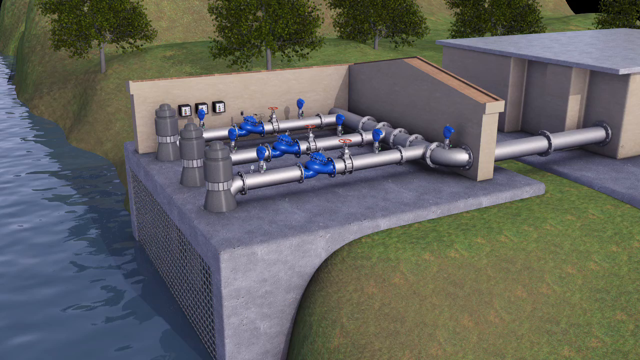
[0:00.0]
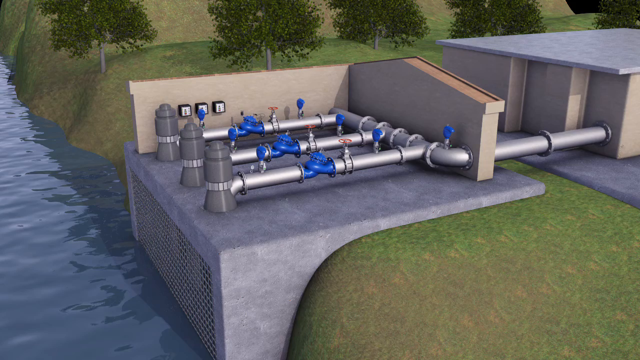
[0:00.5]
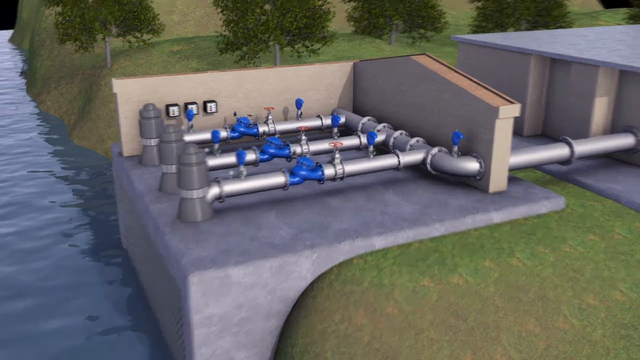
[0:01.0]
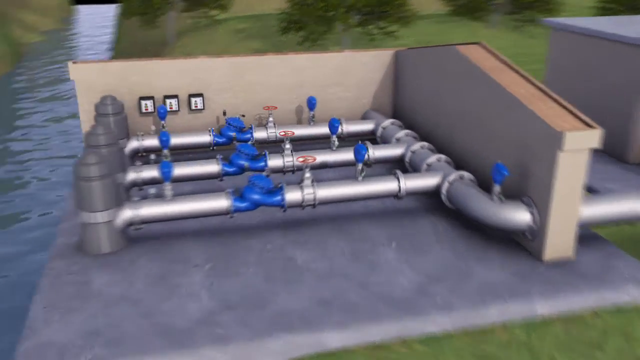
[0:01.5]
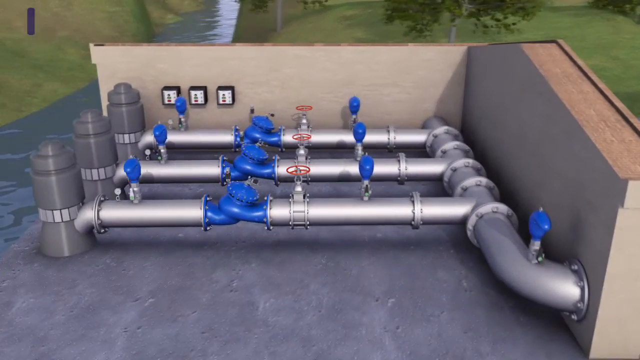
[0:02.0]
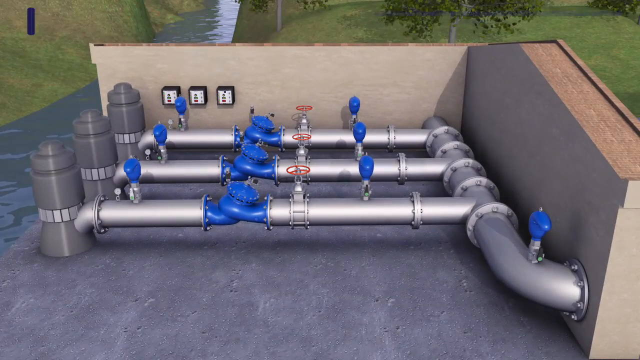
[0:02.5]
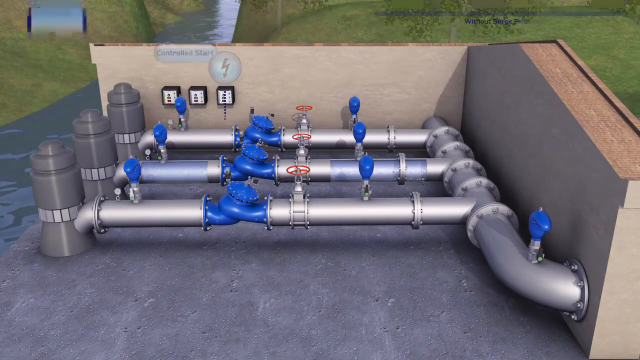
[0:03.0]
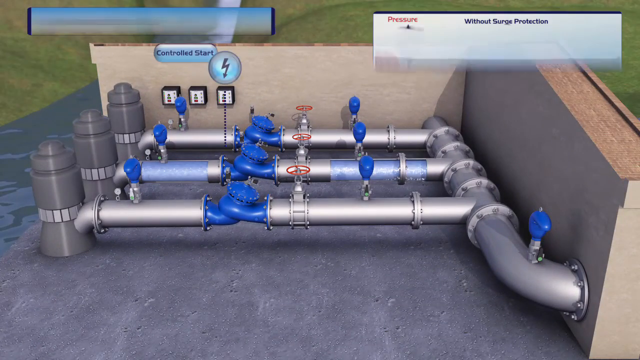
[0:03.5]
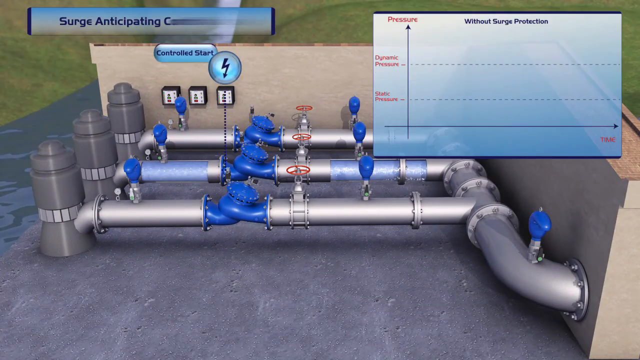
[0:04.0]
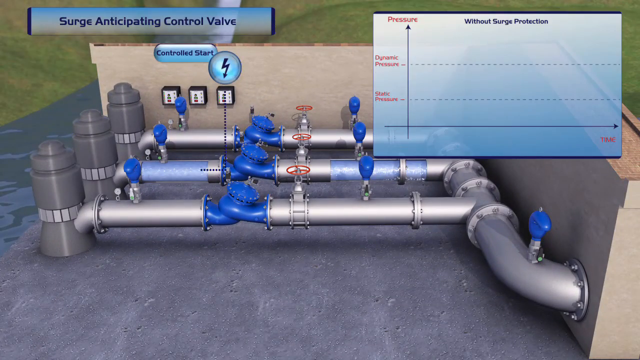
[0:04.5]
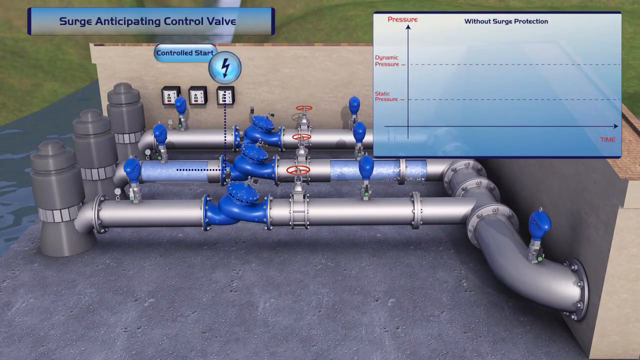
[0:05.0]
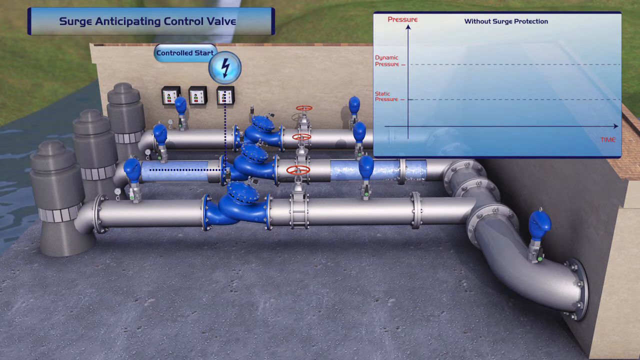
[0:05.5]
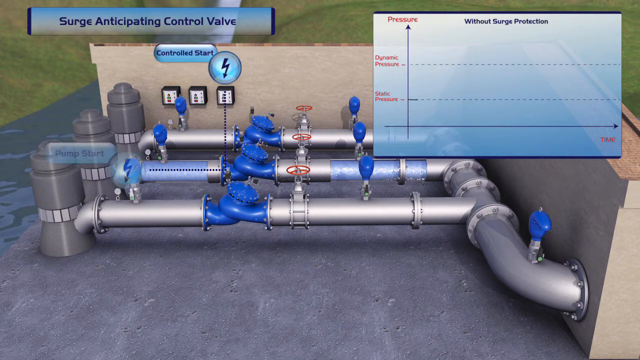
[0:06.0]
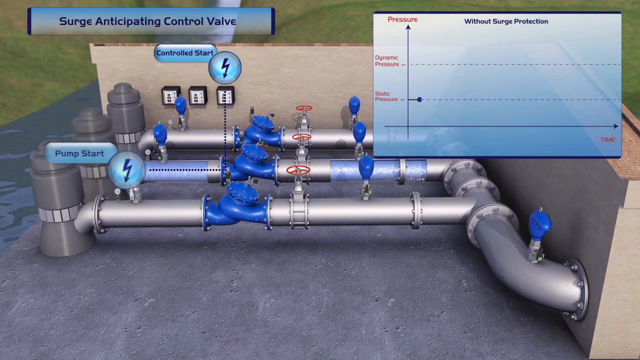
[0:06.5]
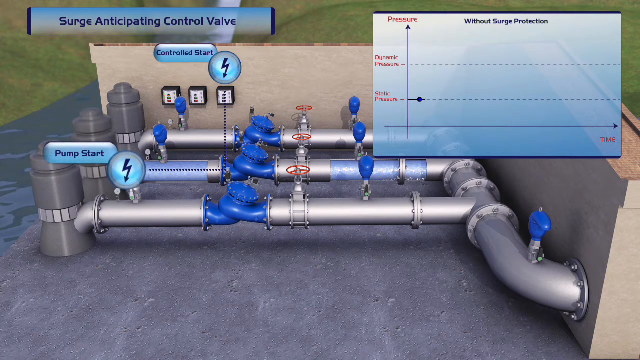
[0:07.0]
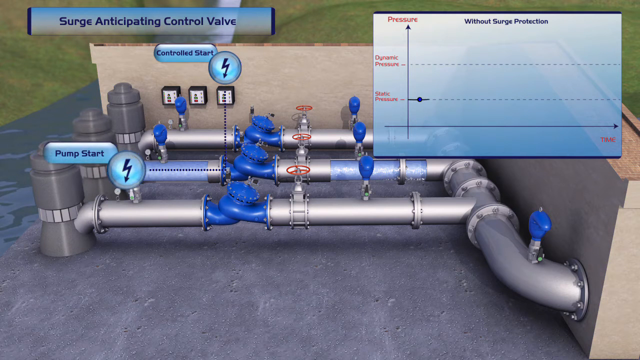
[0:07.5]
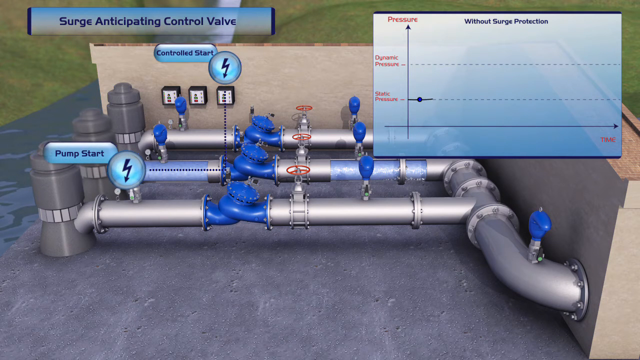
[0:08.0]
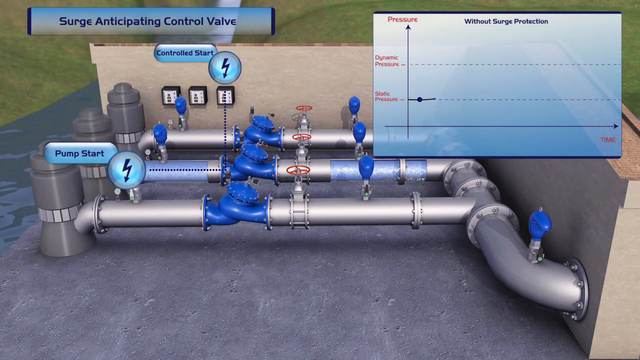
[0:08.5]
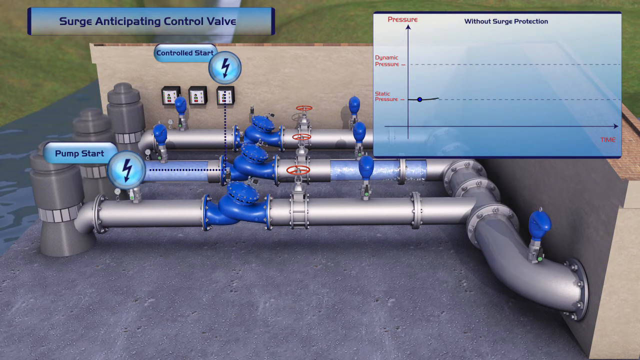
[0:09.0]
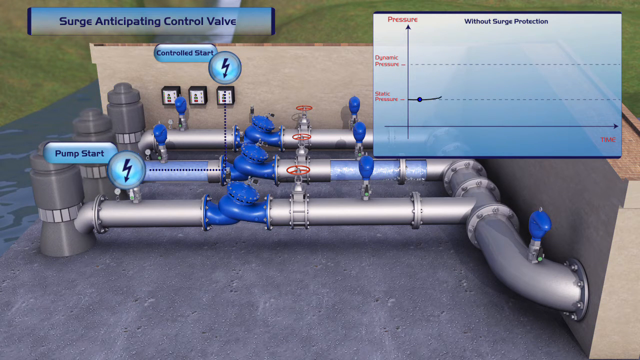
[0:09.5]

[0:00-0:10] A structure is built on the bank of a body of water. On the left-hand side is water, and to the right of it is the bank, with trees in the background. In the foreground is a structure with a back wall and a wall on the right. Its foundation is a concrete slab that extends down into the edge of the water. Inside the structure, a series of three pipes runs from left to right and meets one larger pipe on the right, which exits the building on the right and goes into a second building to the right of the first. The structures have blue valves in the center, and on top of them each has two other blue gauges or valves; in the very center there is a red shutoff valve.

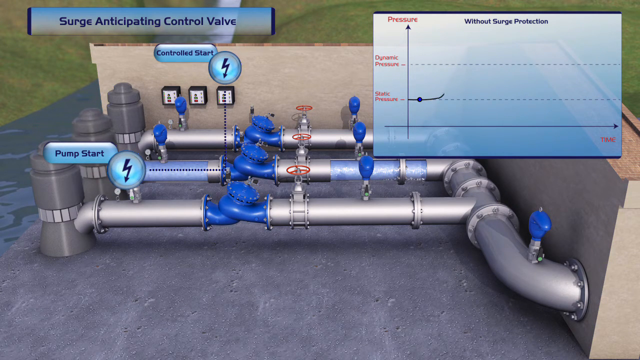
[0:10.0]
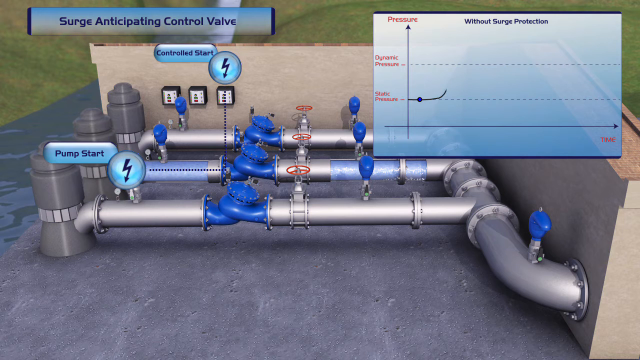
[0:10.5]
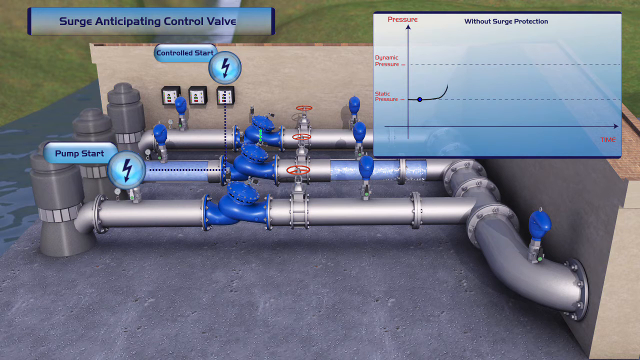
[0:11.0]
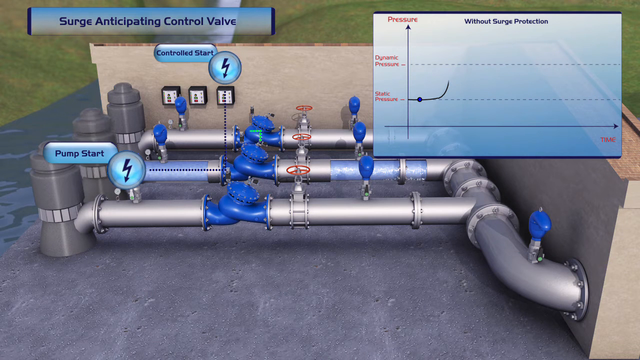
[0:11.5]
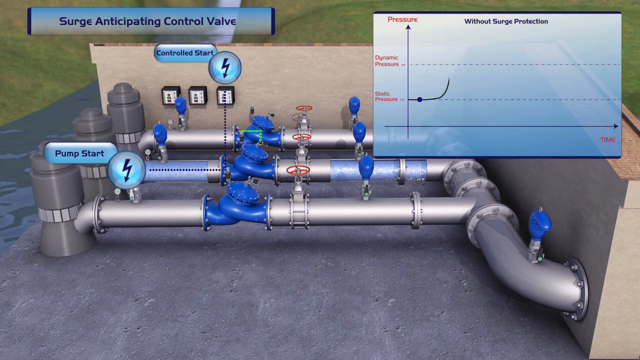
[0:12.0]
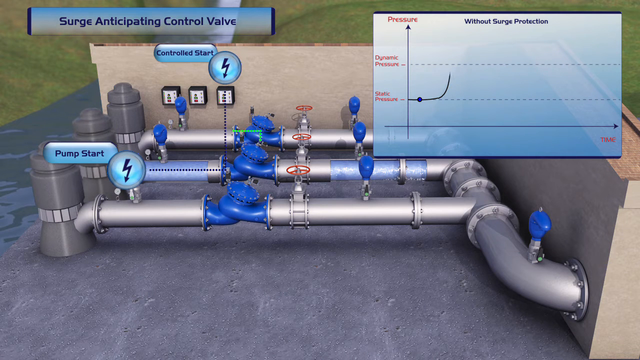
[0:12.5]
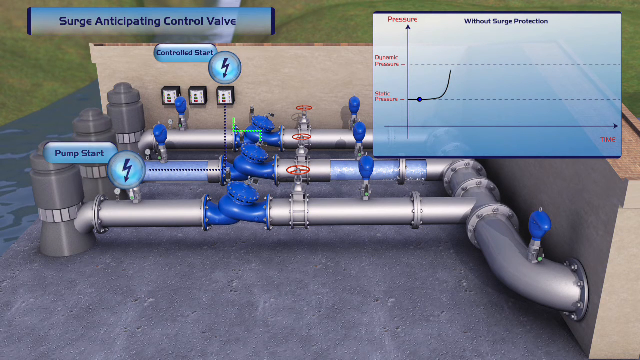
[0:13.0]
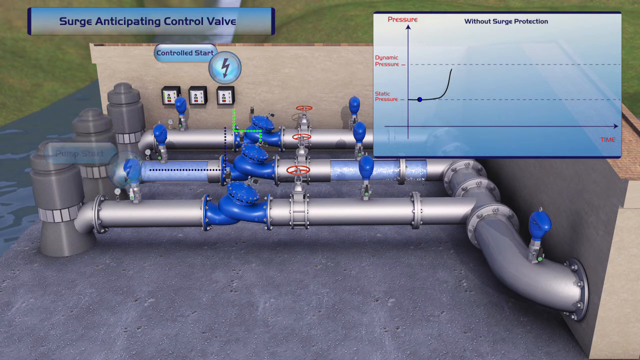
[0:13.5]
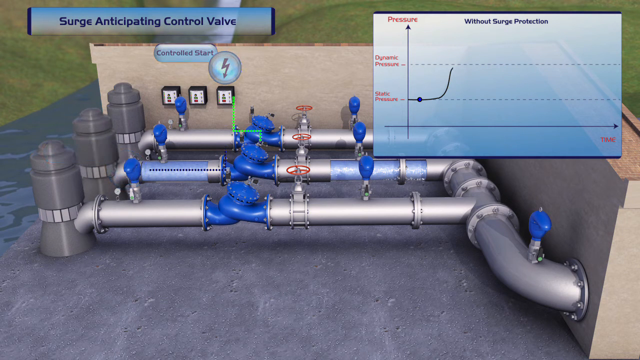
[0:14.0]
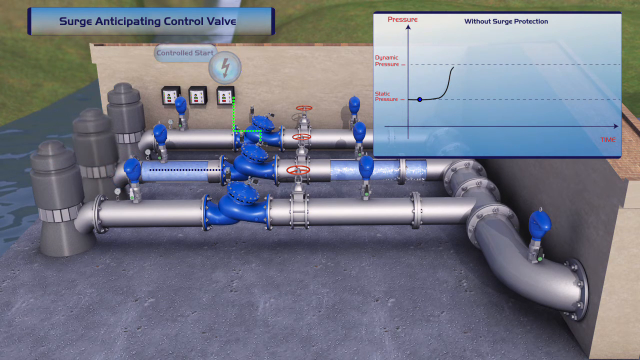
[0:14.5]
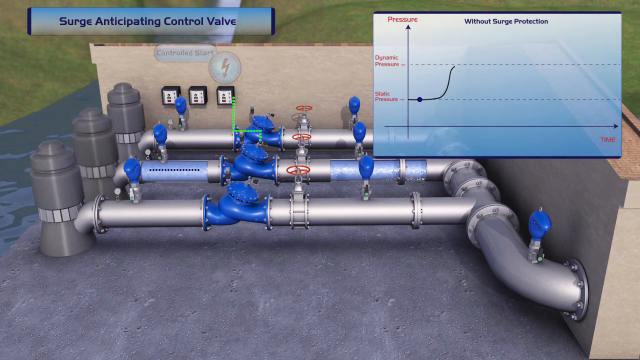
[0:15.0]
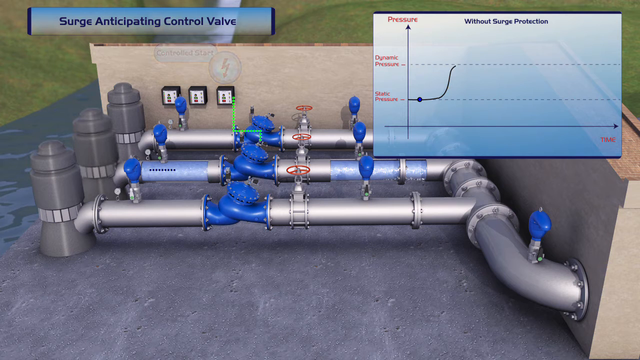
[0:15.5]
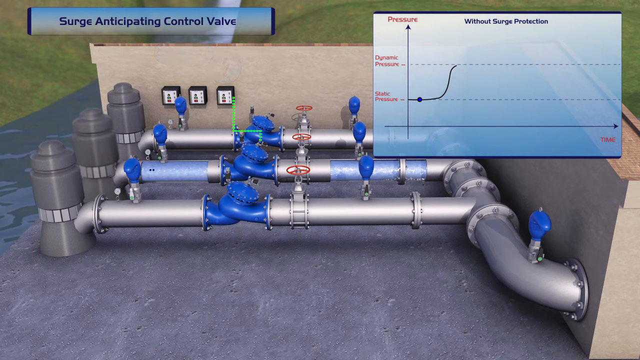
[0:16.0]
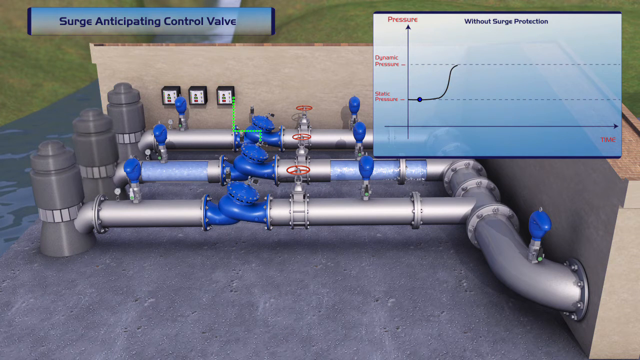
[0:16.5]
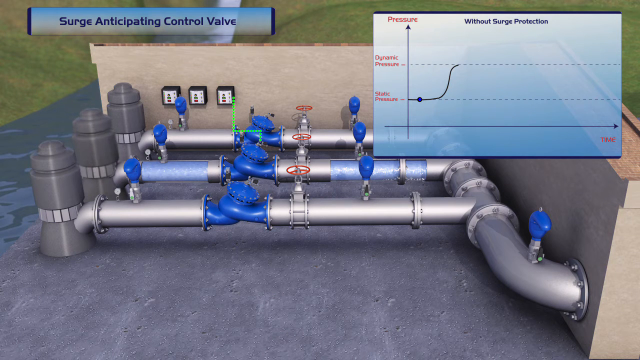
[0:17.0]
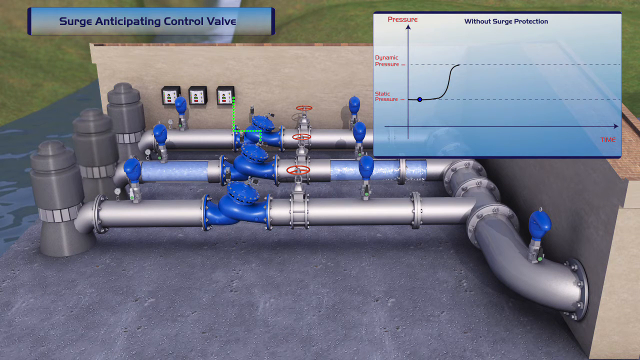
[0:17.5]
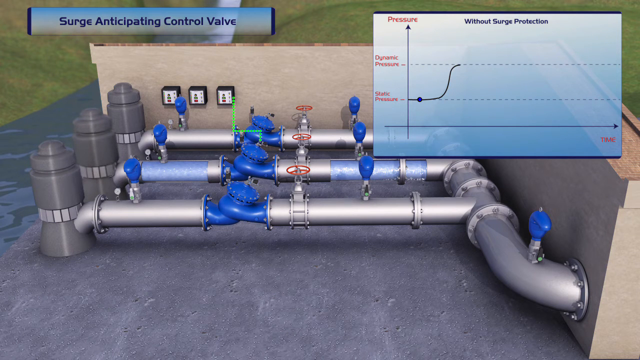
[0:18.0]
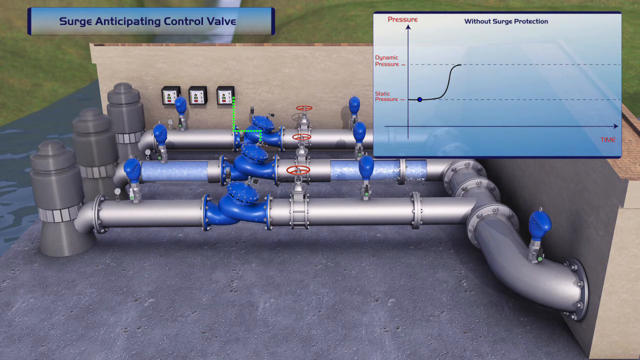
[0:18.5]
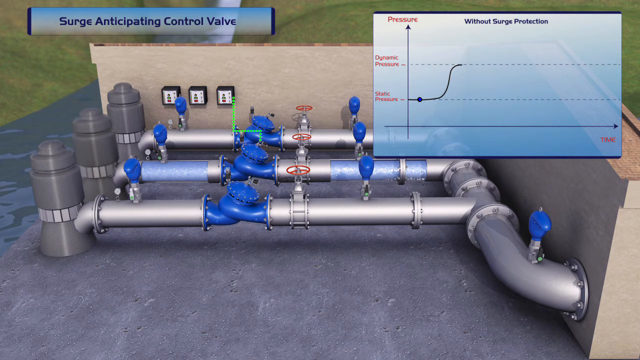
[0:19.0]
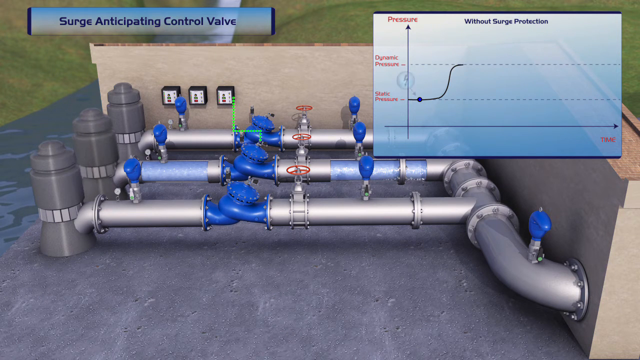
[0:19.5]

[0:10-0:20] The front view shows a structure of pipes next to a body of water, with a wall on the back and to the right. A bar graph is on the screen, and where it says "static pressure" a line starts to be drawn from left to right. It goes out just a bit and then starts to curve upward; there is a circle about halfway between where it follows the dotted line and where it arcs upward. In the upper left corner a blue banner says "surge anticipating control valve", and underneath it a small banner says "control start". Two blue circles contain lightning bolts showing electrical power. A small banner to the left, at the first pump in the front, says "pump start". All of the banners are blue, as is the bar graph on the right. The bar graph is titled "without surge protection"; it shows pressure at the top, and dynamic pressure and static pressure are the two lines running horizontally.